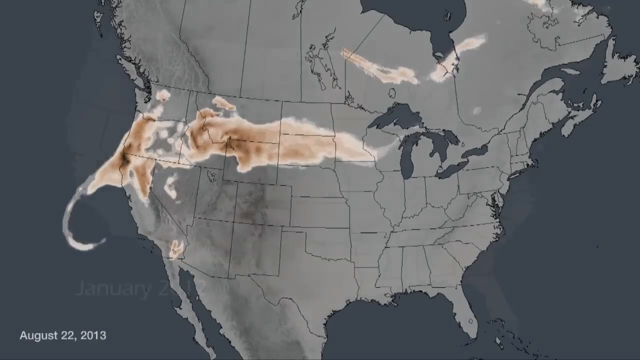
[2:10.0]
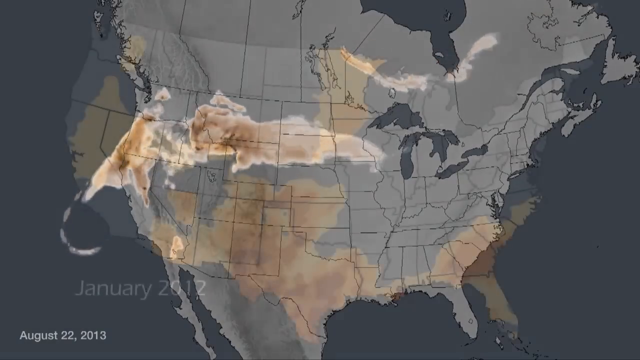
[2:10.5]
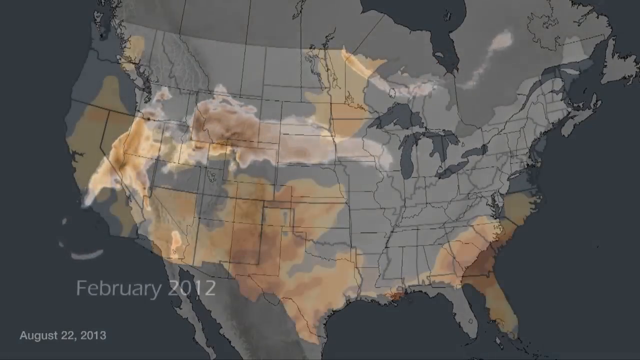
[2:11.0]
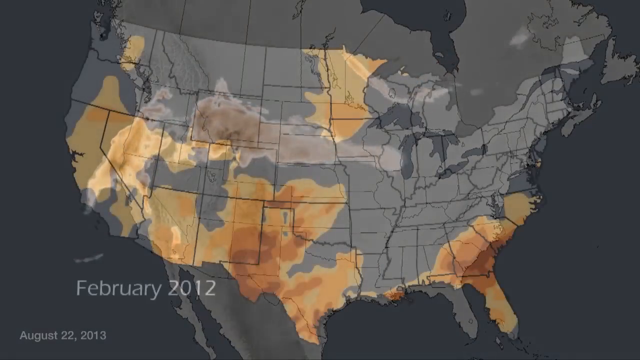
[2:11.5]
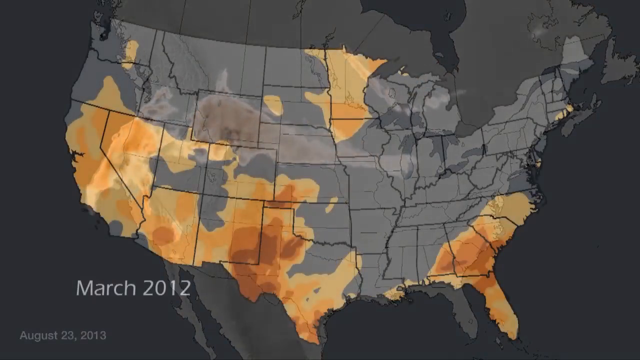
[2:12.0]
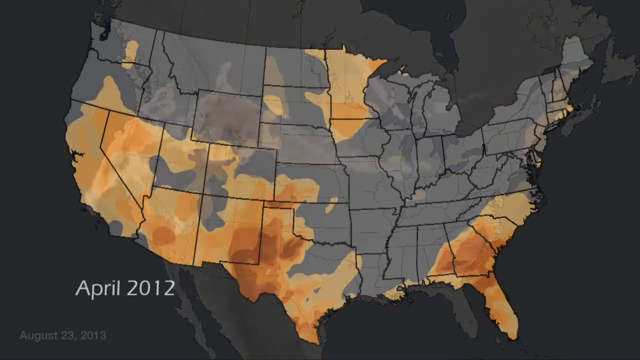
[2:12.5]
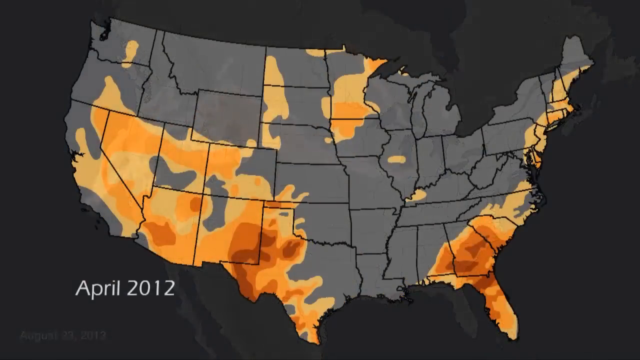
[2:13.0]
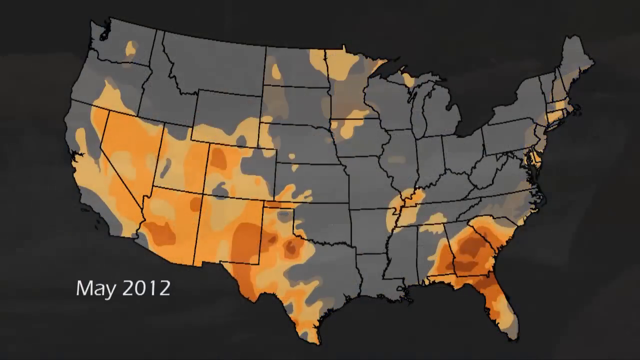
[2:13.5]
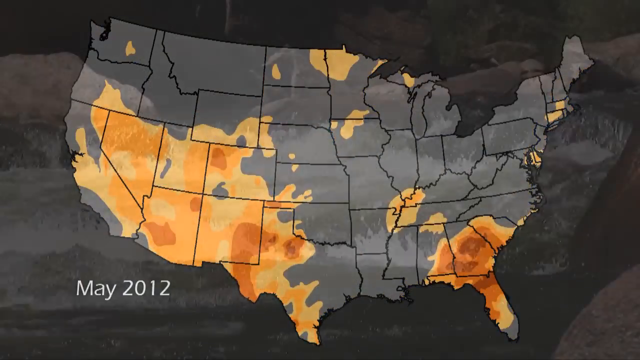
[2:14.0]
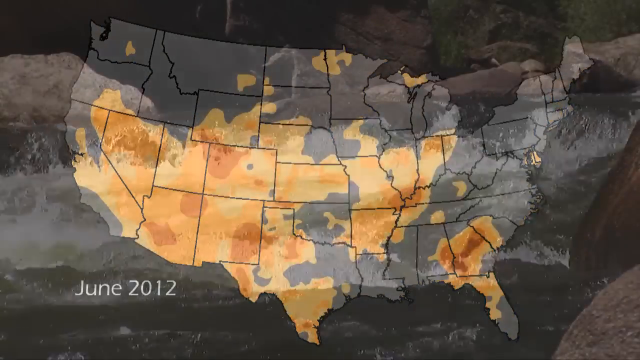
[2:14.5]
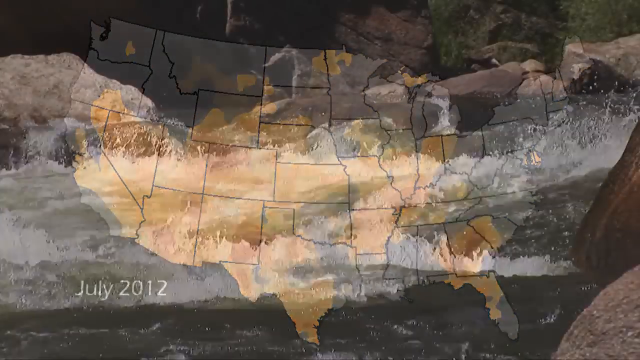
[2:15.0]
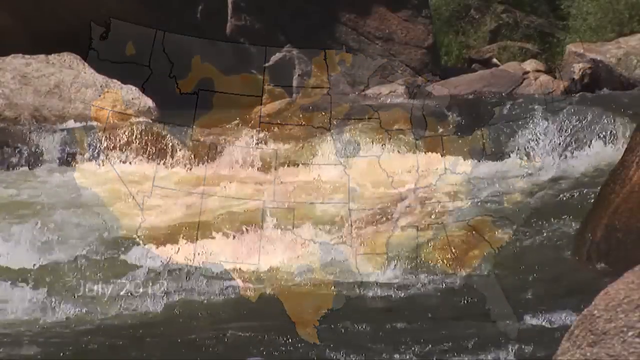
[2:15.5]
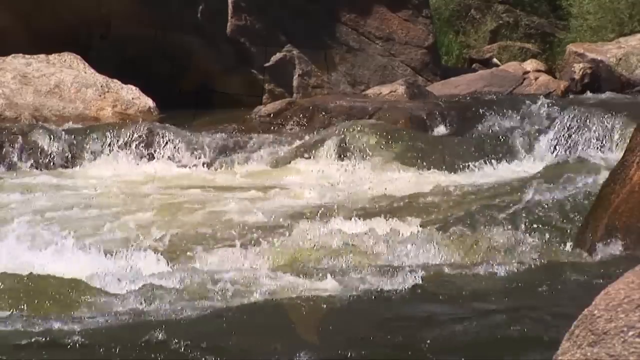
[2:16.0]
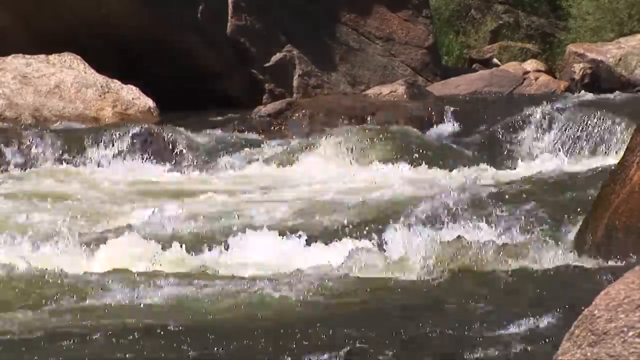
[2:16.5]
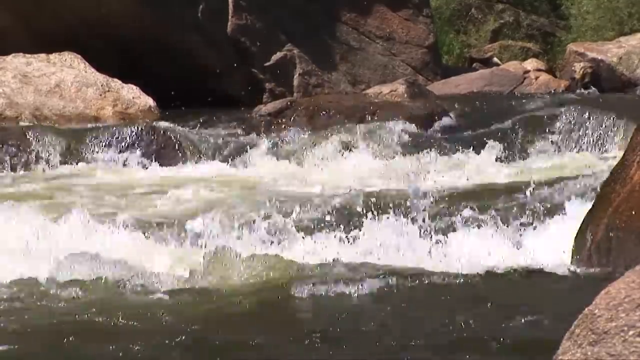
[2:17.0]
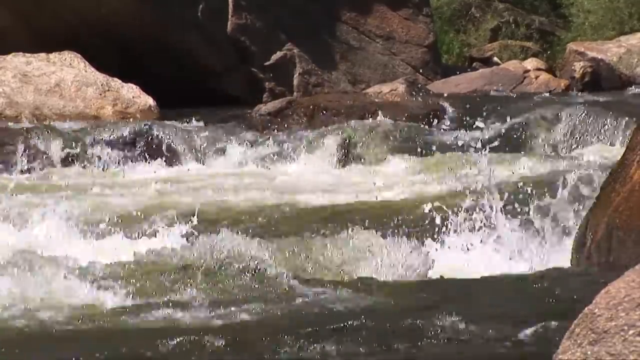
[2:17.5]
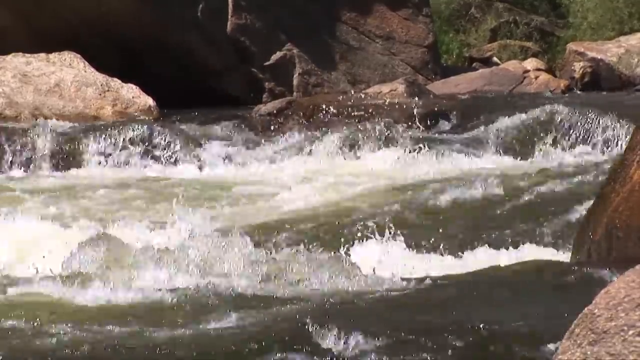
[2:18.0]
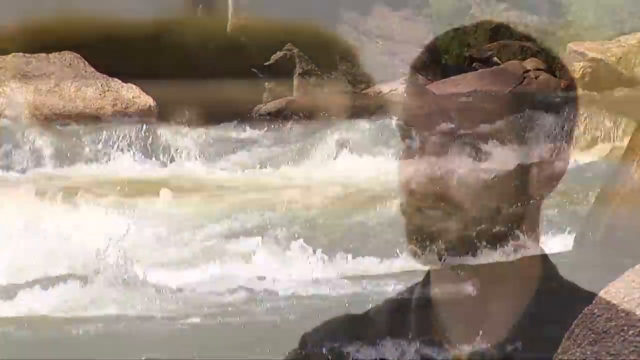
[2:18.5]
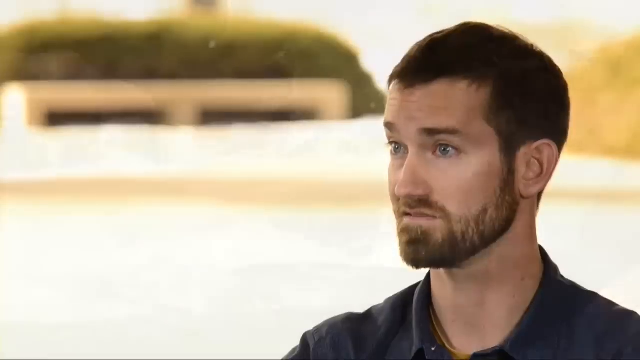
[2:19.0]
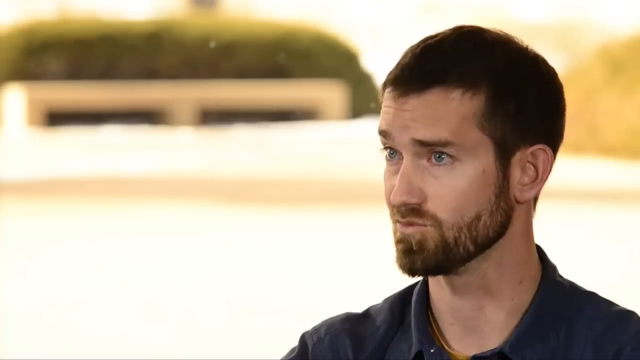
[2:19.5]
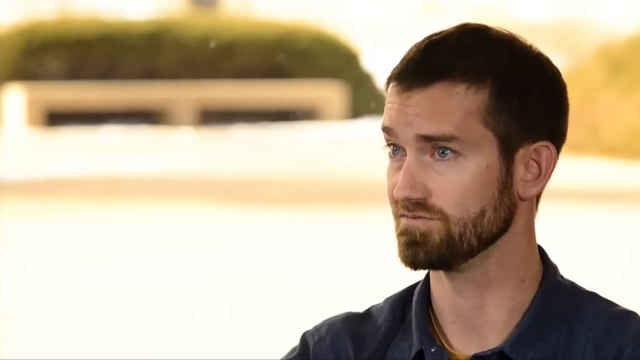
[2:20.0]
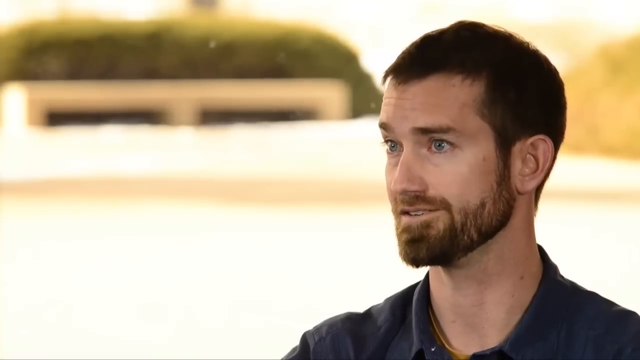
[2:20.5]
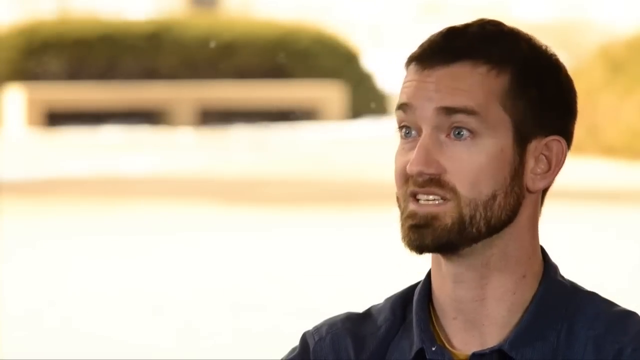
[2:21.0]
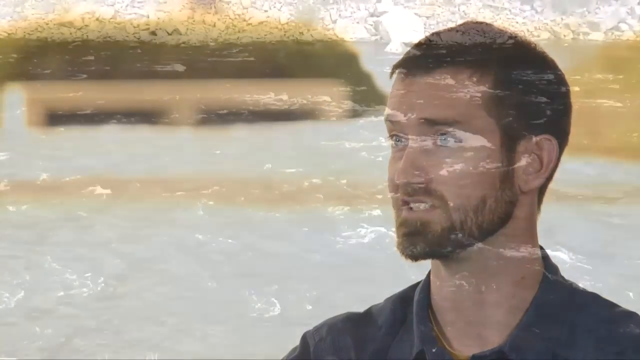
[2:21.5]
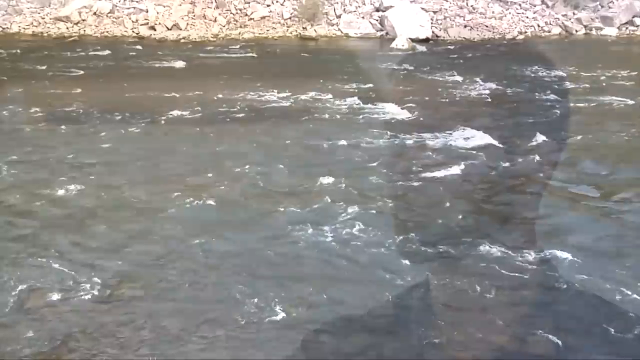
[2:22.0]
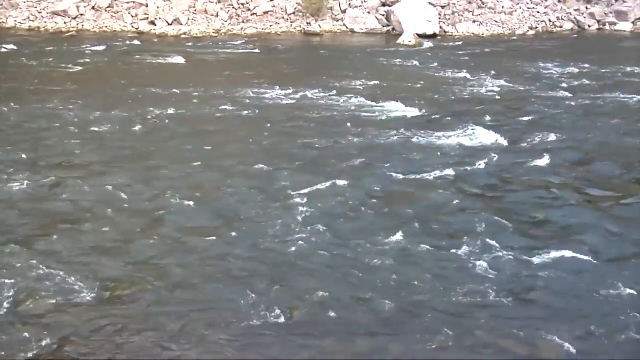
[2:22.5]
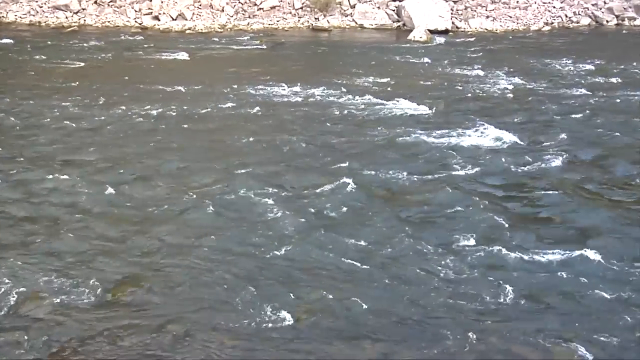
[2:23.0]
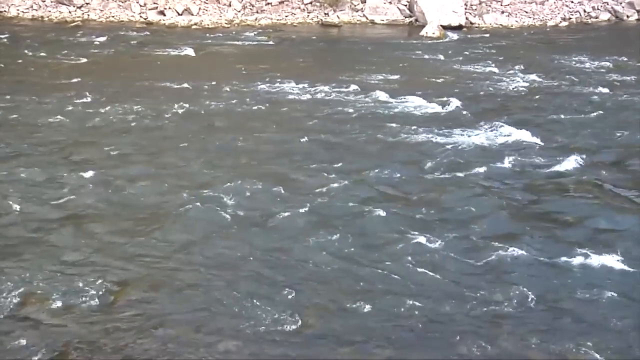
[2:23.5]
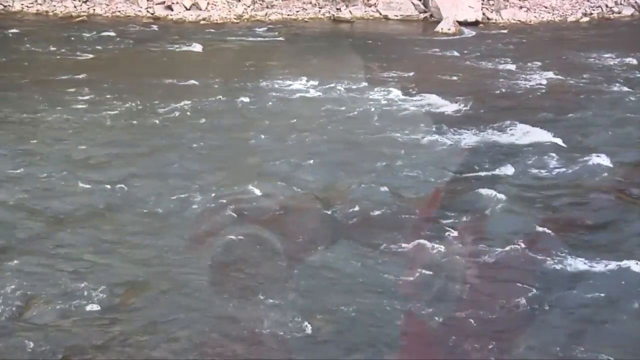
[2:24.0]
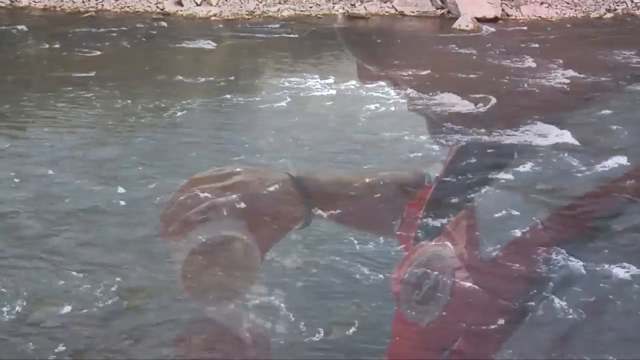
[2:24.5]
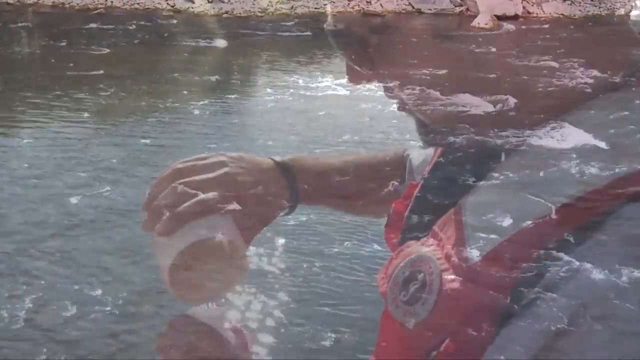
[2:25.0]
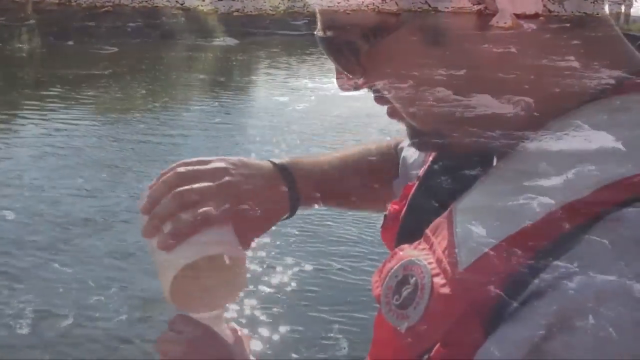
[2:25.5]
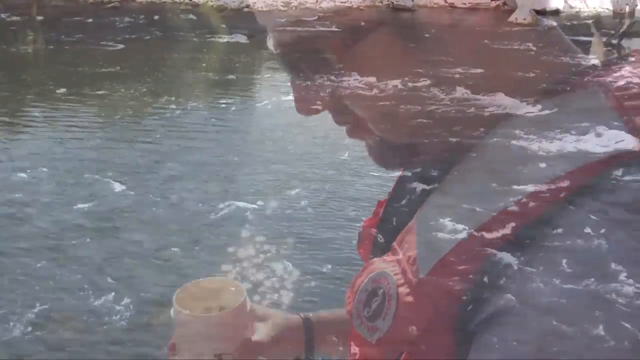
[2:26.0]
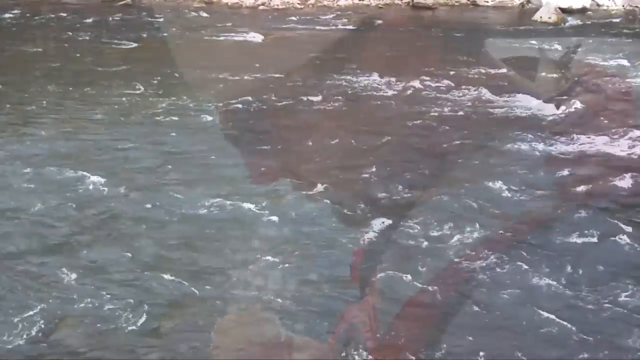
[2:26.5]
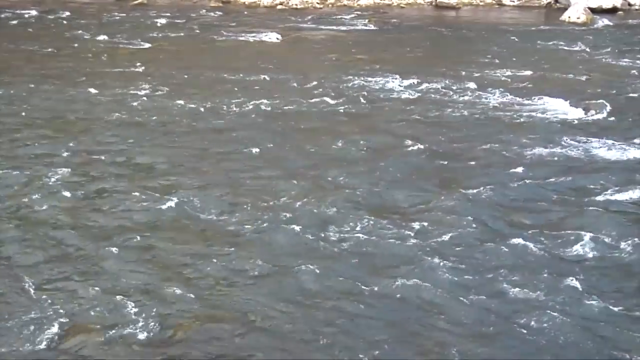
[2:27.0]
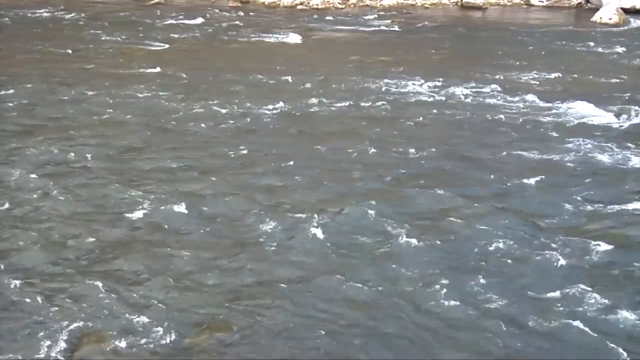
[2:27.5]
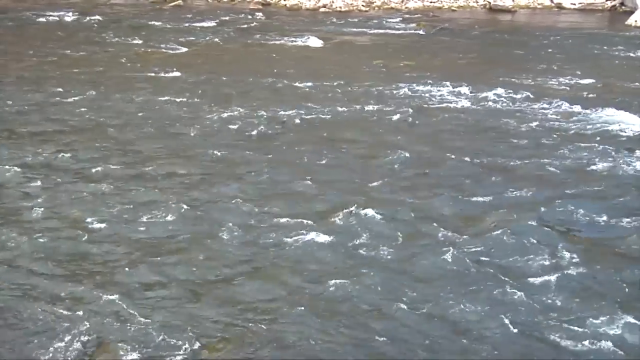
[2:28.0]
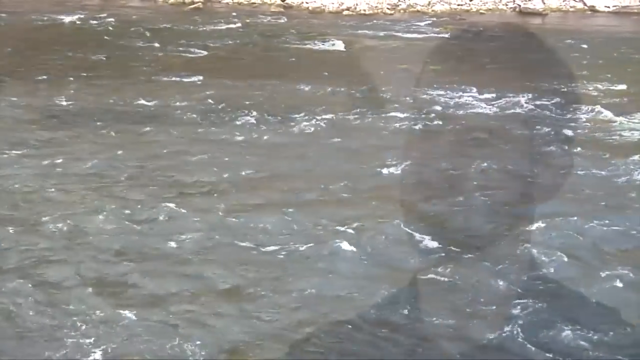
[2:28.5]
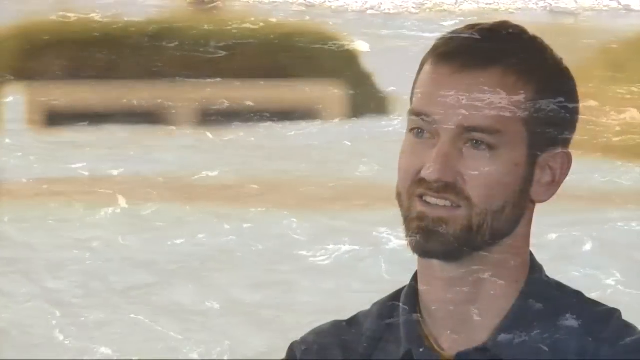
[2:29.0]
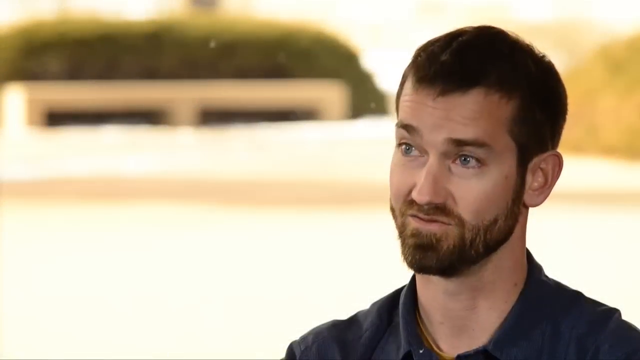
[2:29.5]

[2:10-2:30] A grey map of North America shows the states outlined, with an image of a large brownish-white cloud across the left-hand side of the continent. Some of the states are highlighted in a yellow-orange colour, and writing on the screen says "May 2012". The video switches to water running through a river over rocks and boulders, with white rapids as the water flows past. A man with short dark hair, a dark moustache and beard, wearing a dark blue shirt, talks to somebody off screen, nodding his head. As he speaks, more water flows from right to left with some small white rapid areas. The man is then back talking to the camera; he slightly raises an eyebrow and nods as he talks, and he seems concerned about the subject.